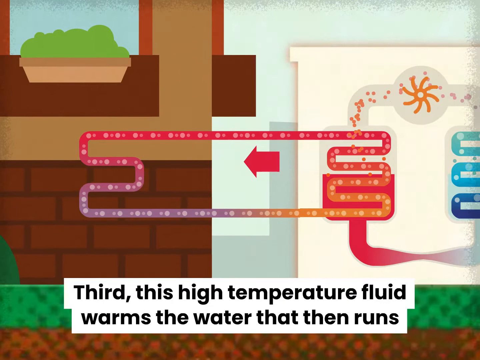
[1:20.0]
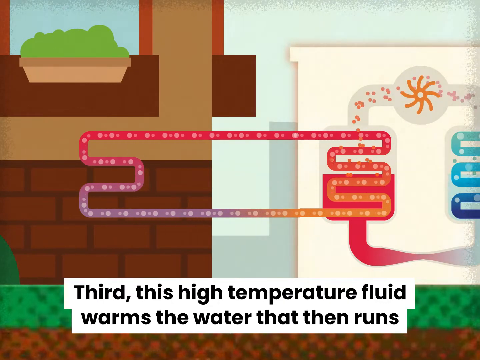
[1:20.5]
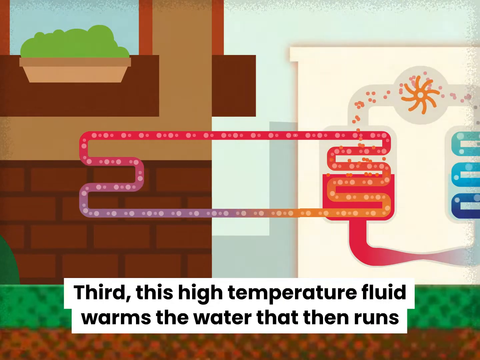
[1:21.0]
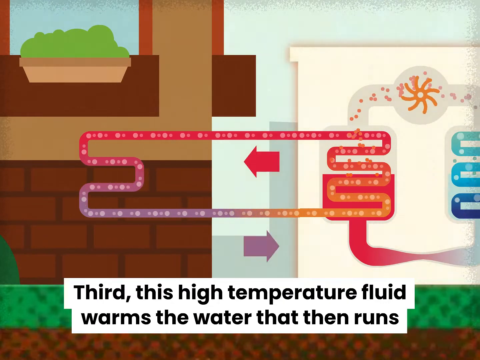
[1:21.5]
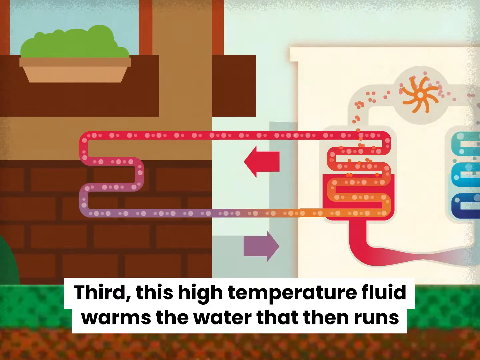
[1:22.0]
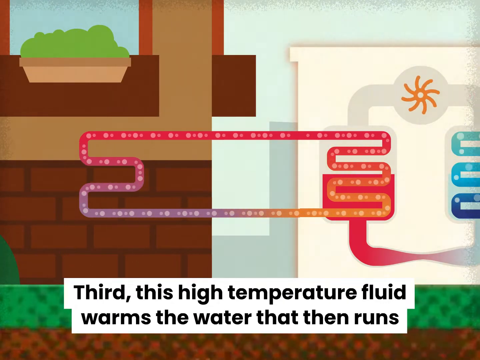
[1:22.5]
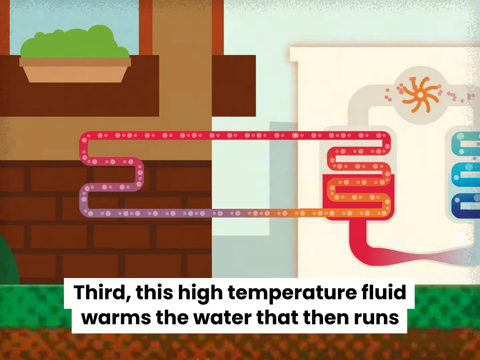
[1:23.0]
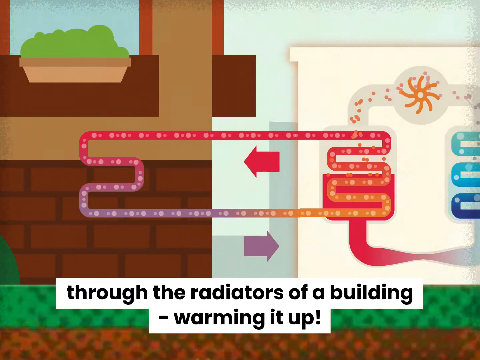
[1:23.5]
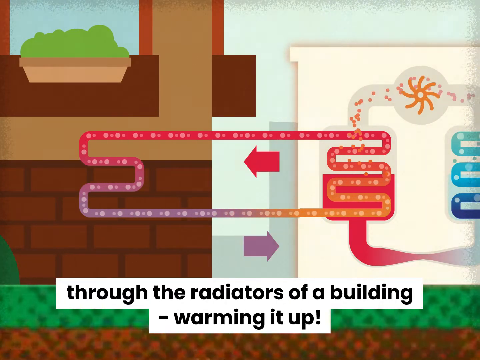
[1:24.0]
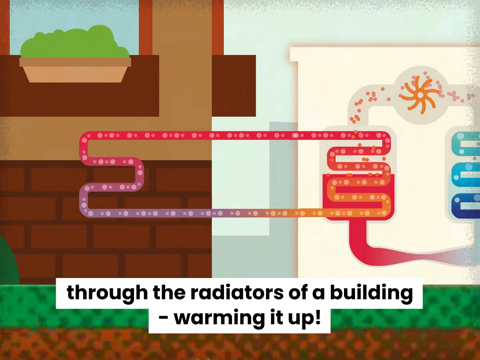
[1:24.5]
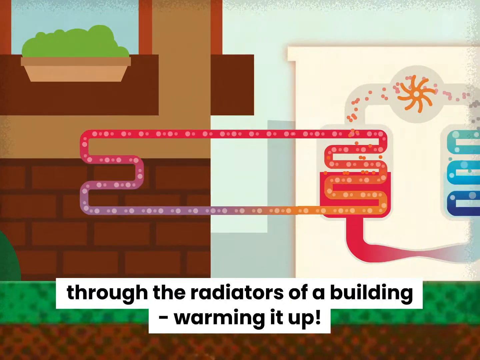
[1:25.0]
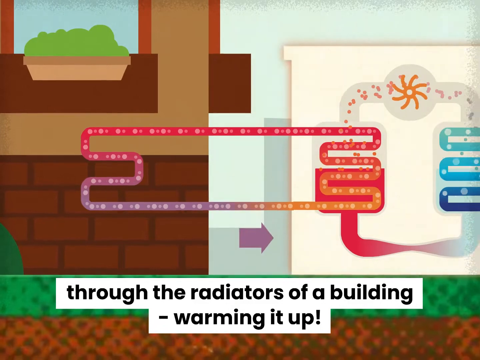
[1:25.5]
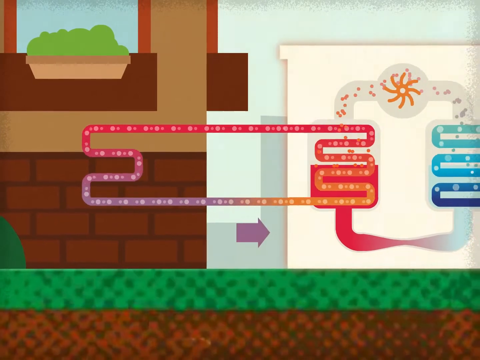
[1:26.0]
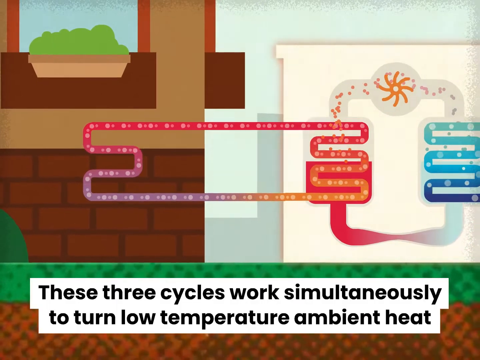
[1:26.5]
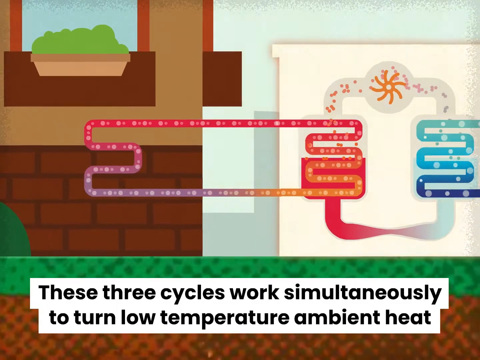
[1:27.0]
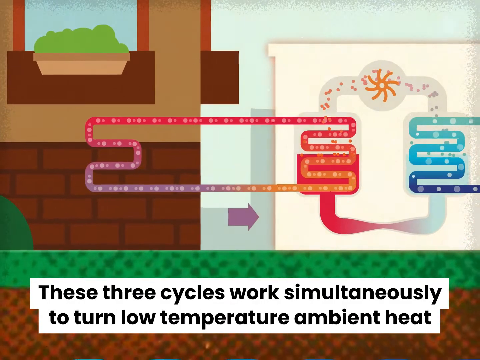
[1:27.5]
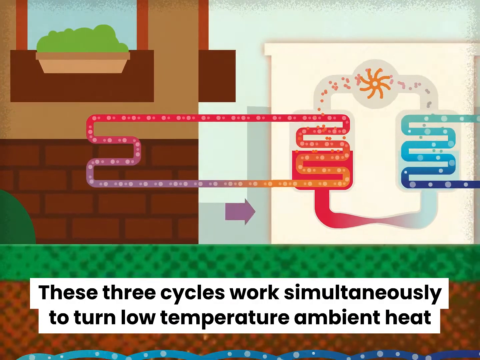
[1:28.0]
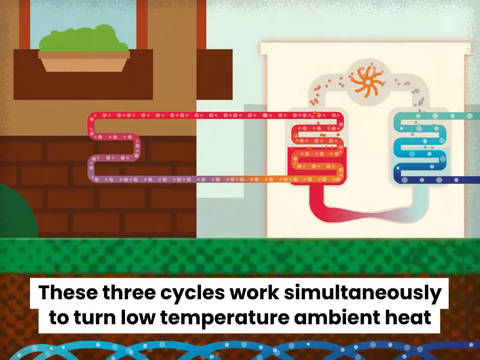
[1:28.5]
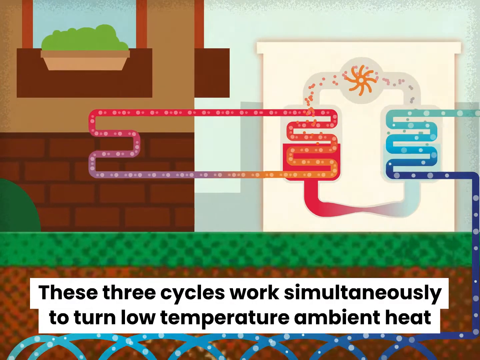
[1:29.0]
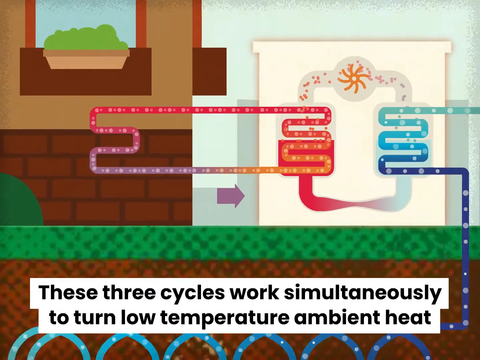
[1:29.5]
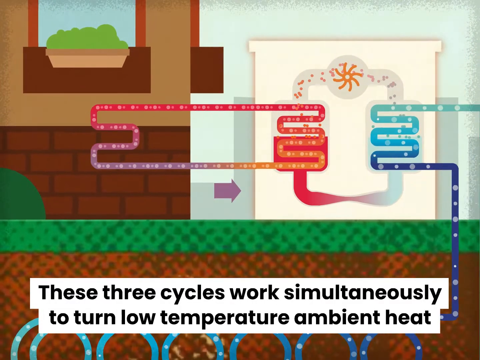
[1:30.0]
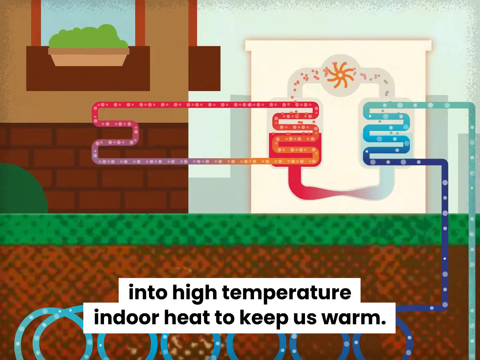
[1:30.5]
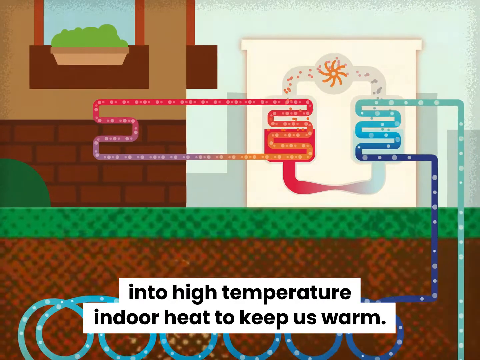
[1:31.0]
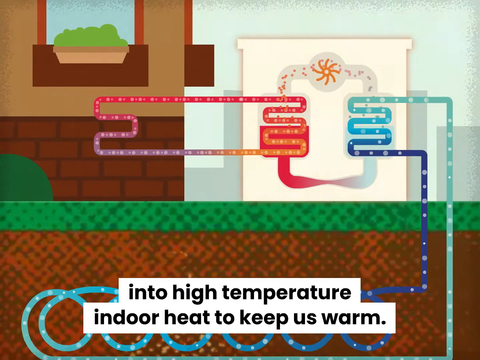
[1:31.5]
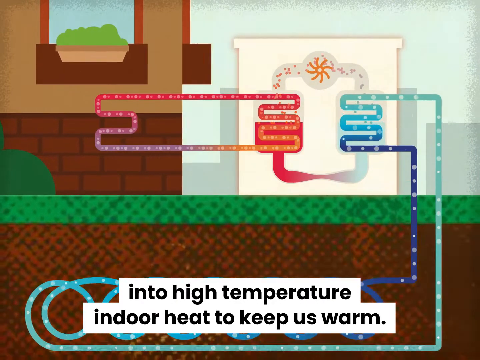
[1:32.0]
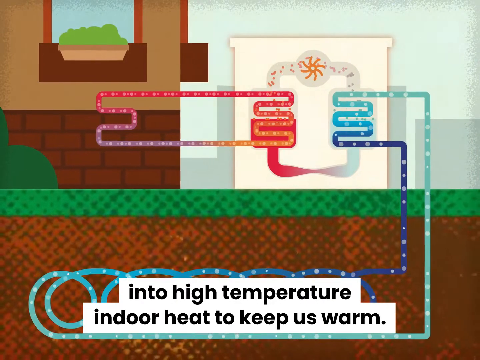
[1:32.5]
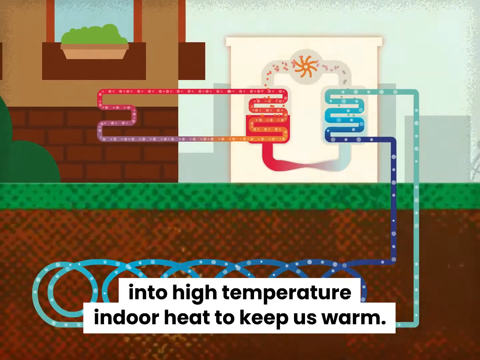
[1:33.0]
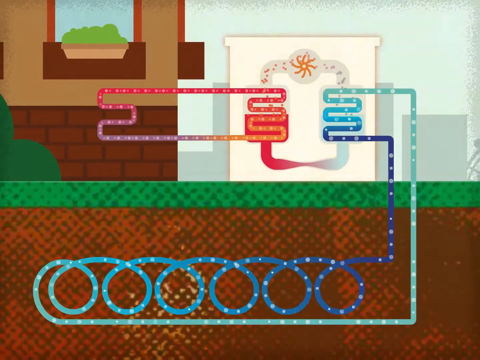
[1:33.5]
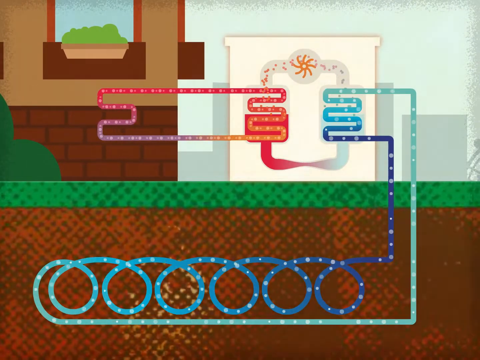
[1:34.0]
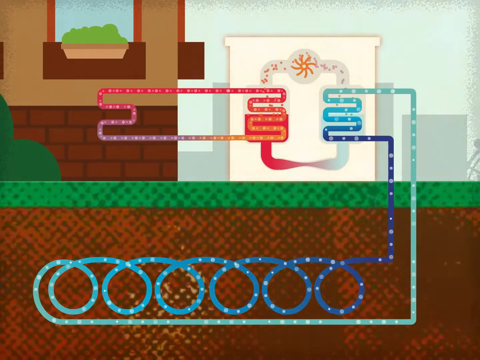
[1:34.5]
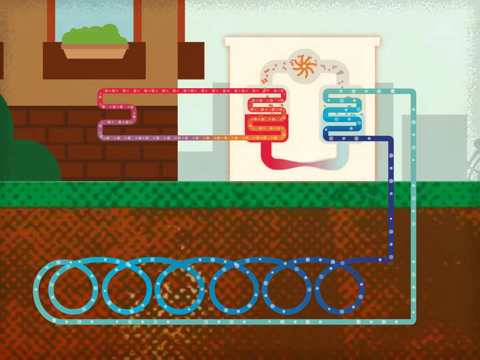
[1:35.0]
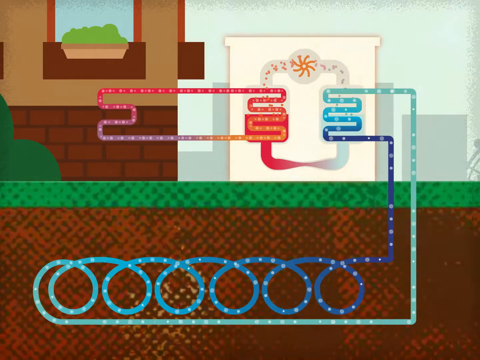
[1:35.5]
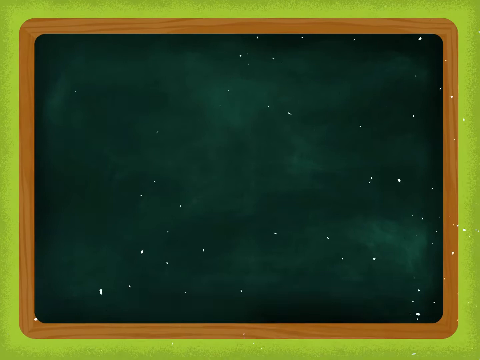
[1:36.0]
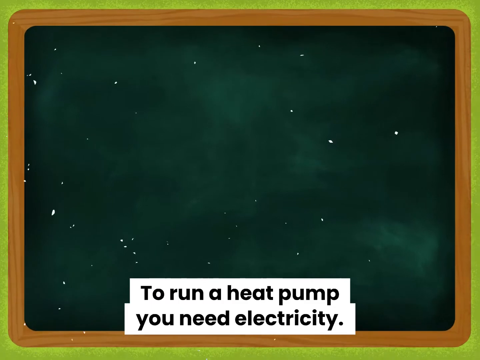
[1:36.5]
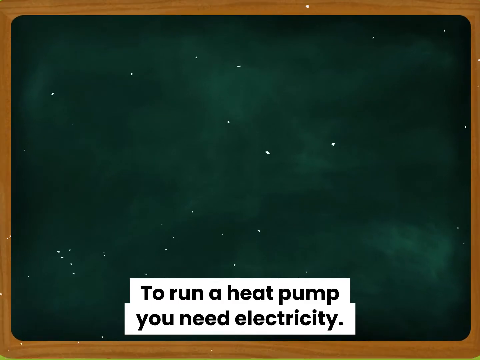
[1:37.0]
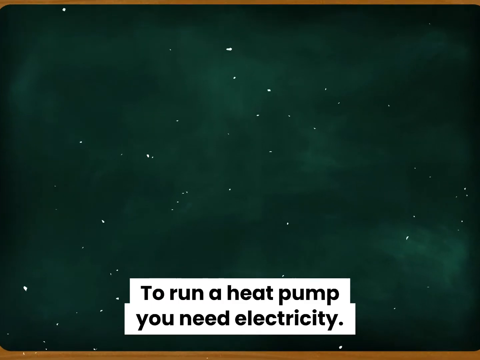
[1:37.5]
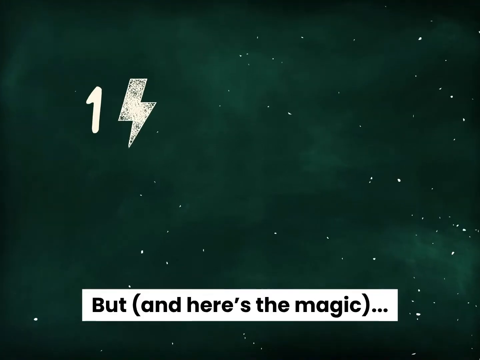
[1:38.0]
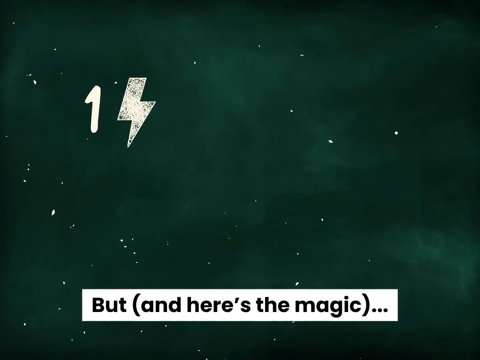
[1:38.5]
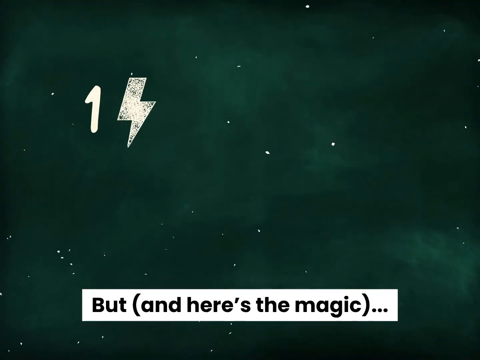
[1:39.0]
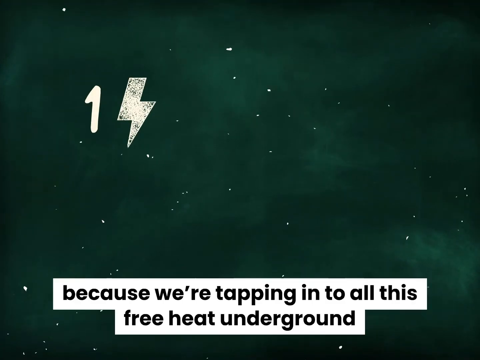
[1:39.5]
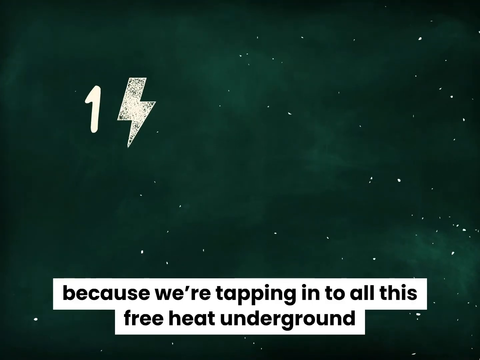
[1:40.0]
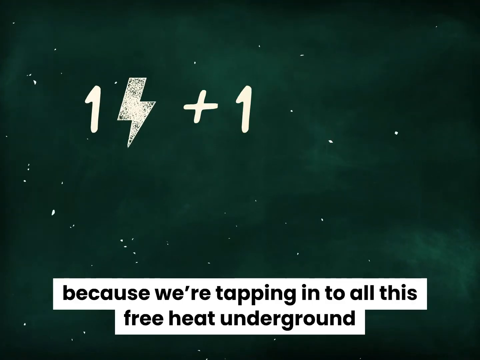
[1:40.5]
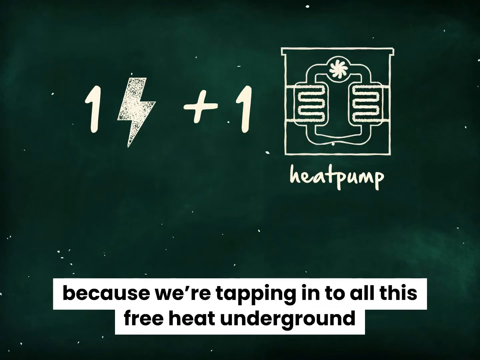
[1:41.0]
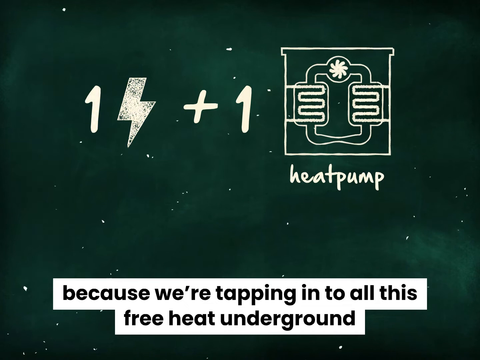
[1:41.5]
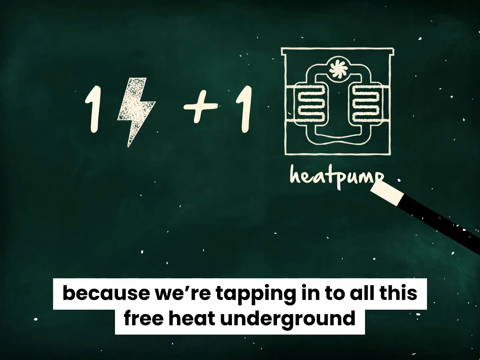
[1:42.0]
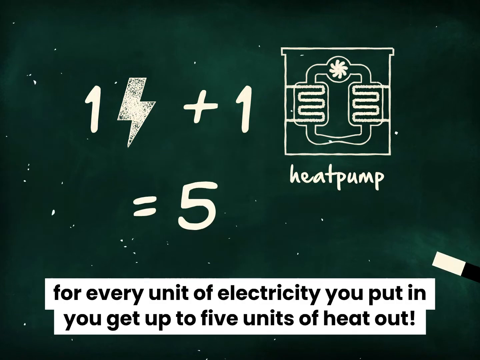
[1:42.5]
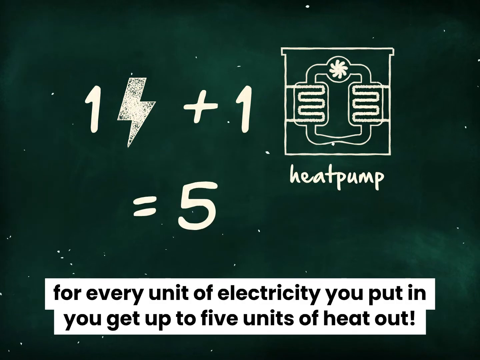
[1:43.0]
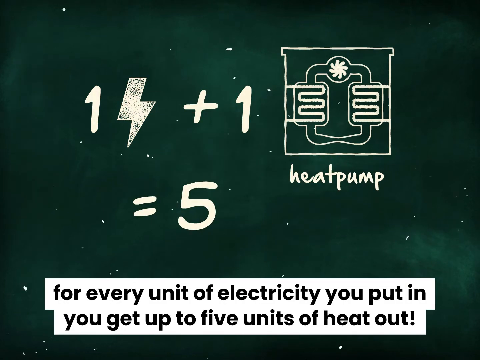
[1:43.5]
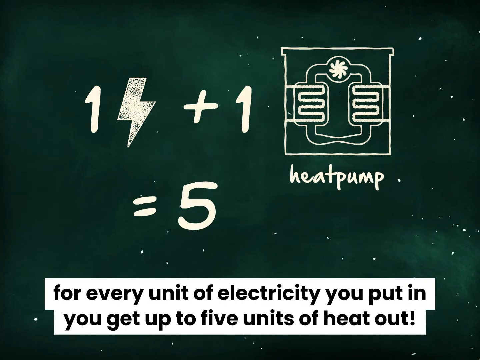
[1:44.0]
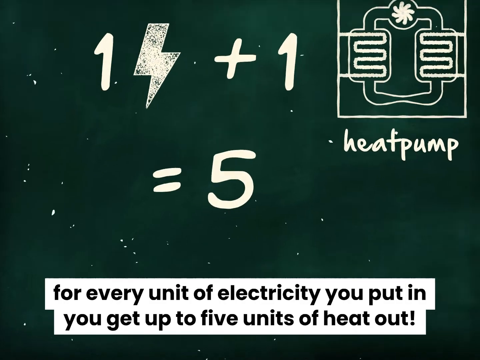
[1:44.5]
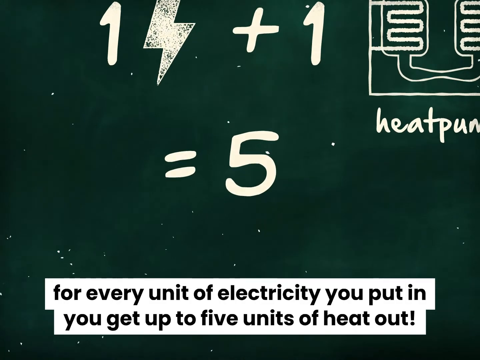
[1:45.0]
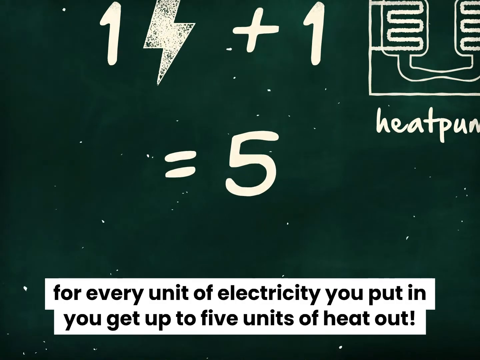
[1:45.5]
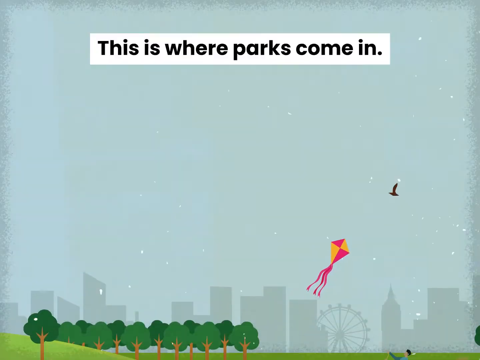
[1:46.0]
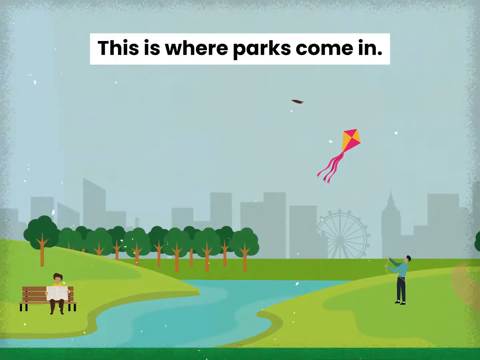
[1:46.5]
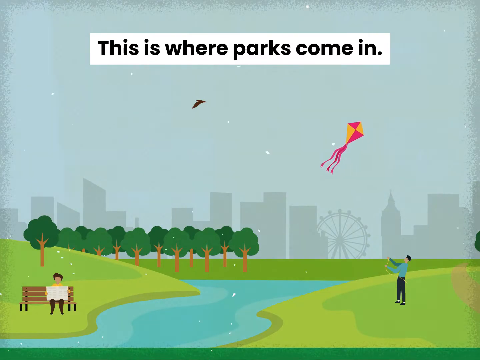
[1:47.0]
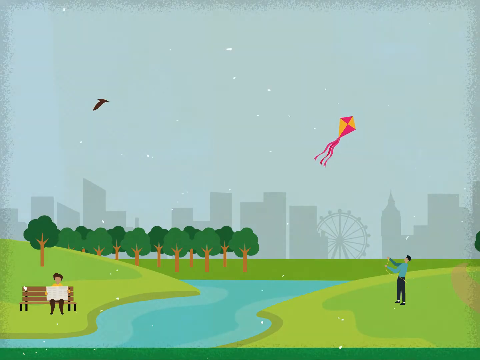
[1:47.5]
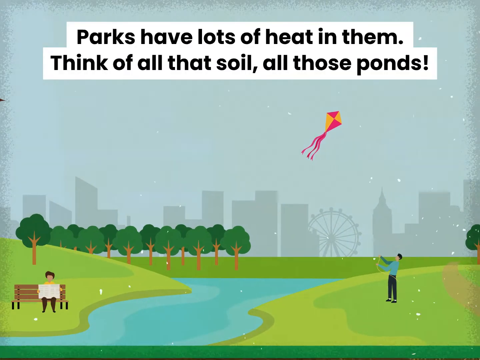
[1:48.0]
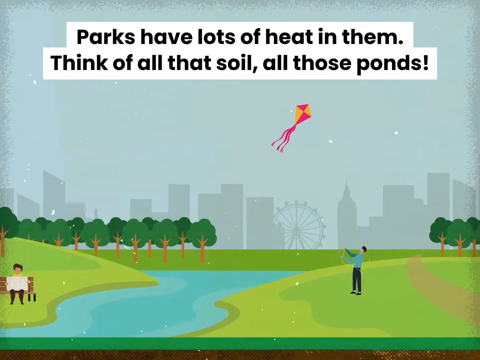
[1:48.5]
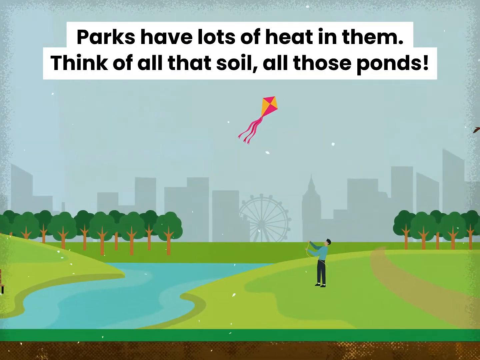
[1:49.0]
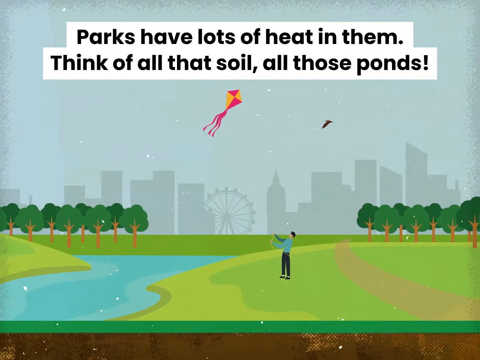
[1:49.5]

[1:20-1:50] The red and blue parts keep moving around like a machine in the same conveyor-belt-like animation of blue and red pipes. Subtitles at the bottom read "third, this high temperature fluid warms the water that runs through the radiators of a building, warming it up. These three cycles work simultaneously to turn low temperature ambient heat into high temperature indoor heat to keep us warm. And to run a heat pump, you need electricity, but, and here's the magic, because we're tapping into all this free heat underground. For every unit of electricity put in, you get up to five units of heat out. This is where parks come in. Parks have lots of heat in them. Think of all that soil, all those ponds." A chalkboard also appears, seemingly giving a visual explanation of what that electricity equals.